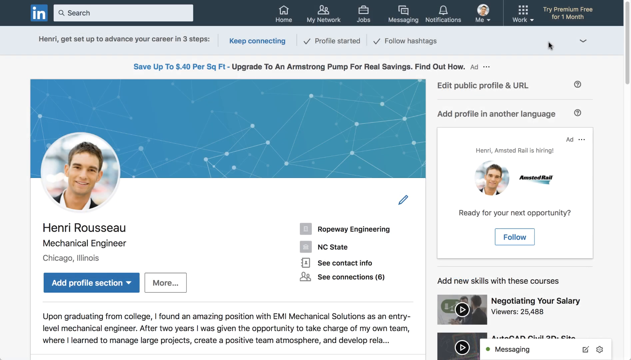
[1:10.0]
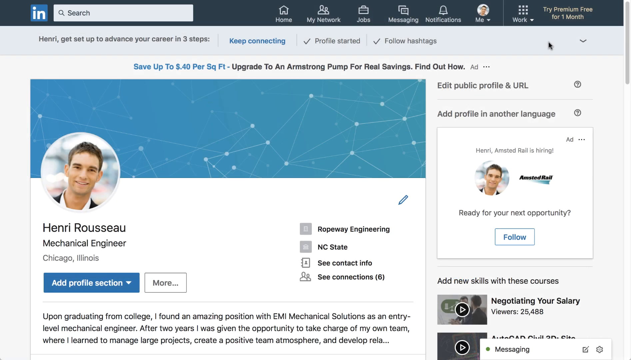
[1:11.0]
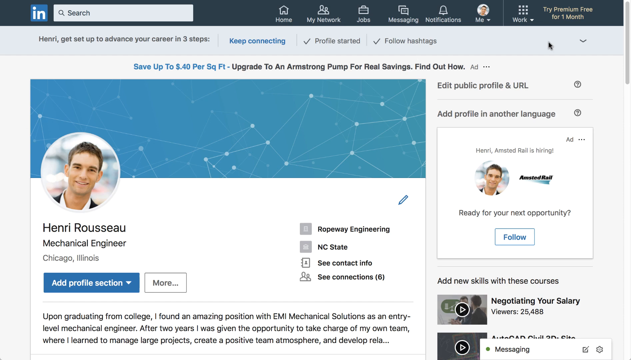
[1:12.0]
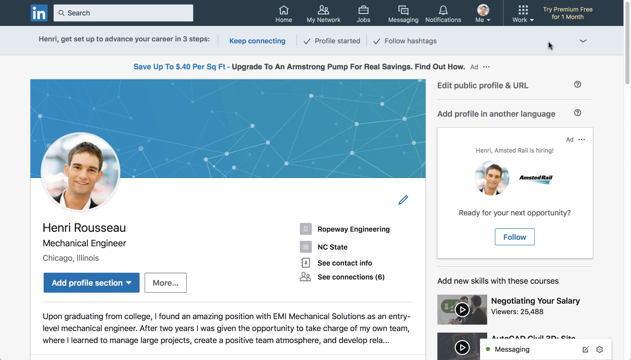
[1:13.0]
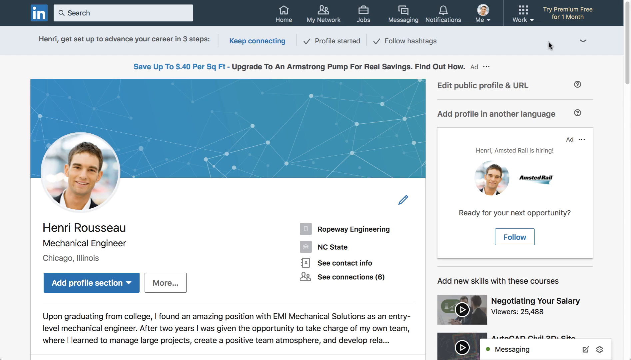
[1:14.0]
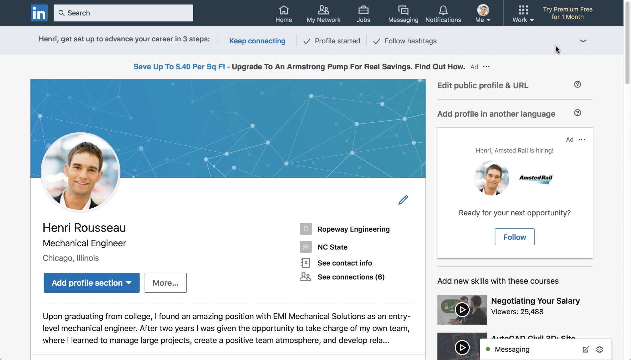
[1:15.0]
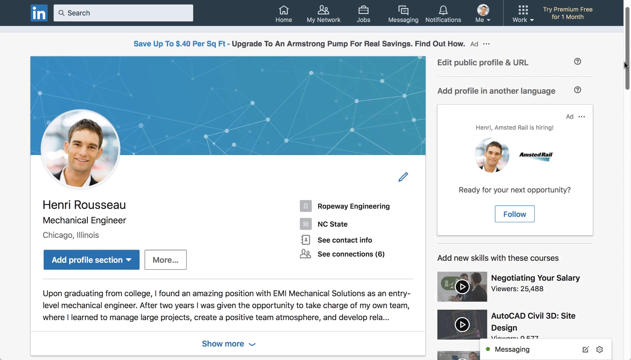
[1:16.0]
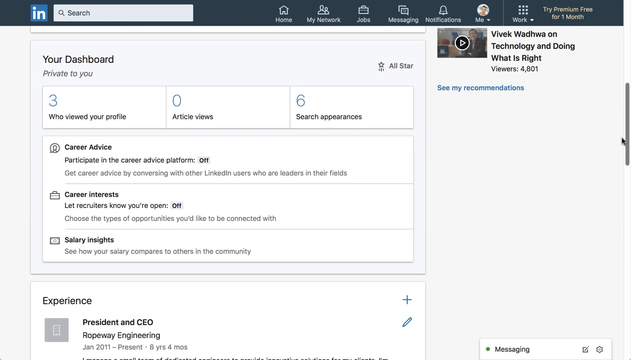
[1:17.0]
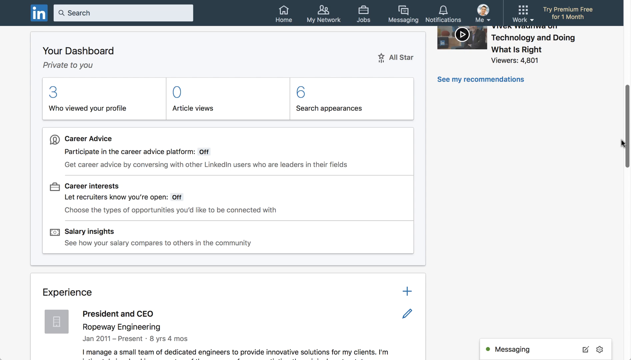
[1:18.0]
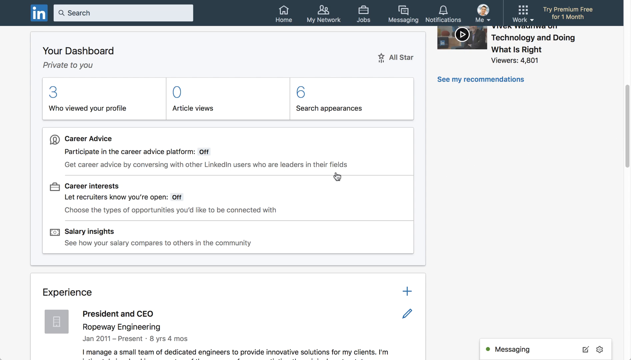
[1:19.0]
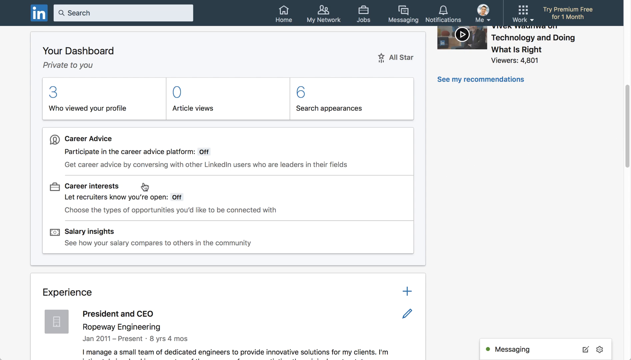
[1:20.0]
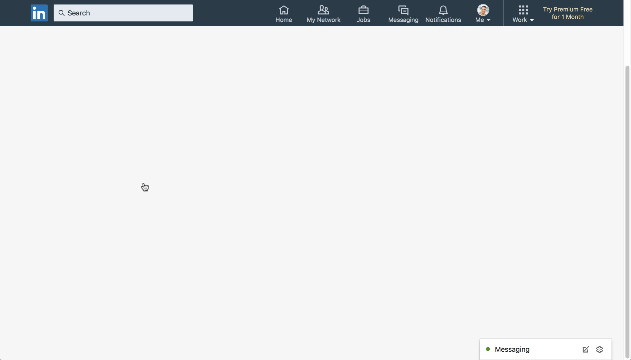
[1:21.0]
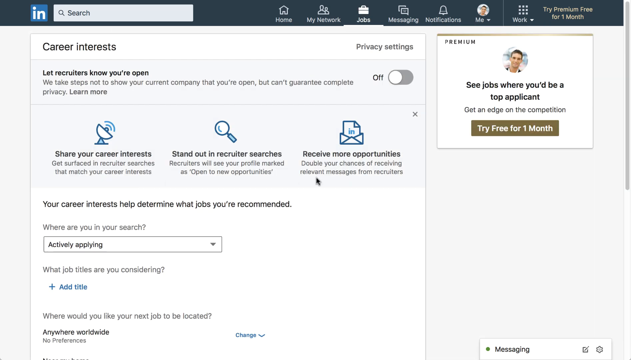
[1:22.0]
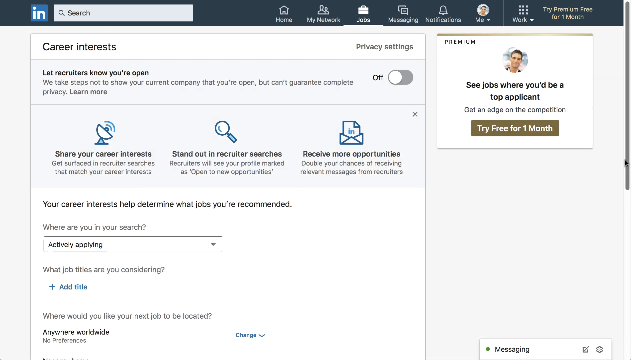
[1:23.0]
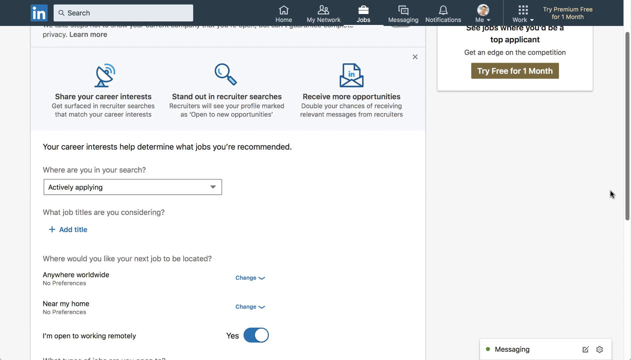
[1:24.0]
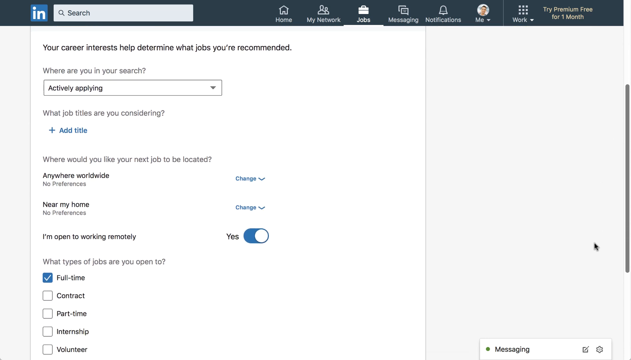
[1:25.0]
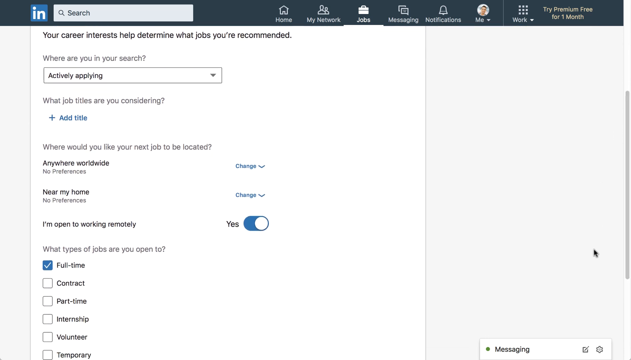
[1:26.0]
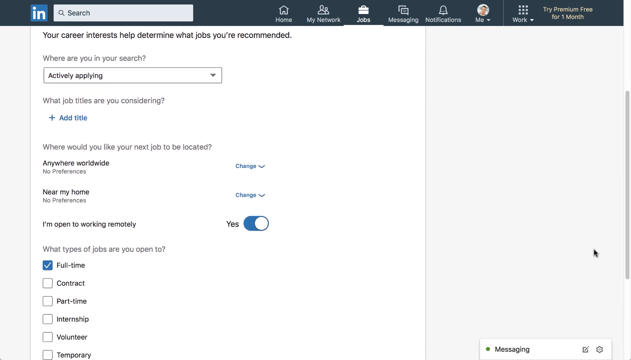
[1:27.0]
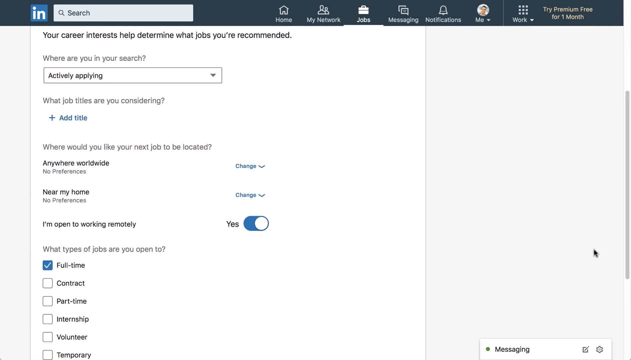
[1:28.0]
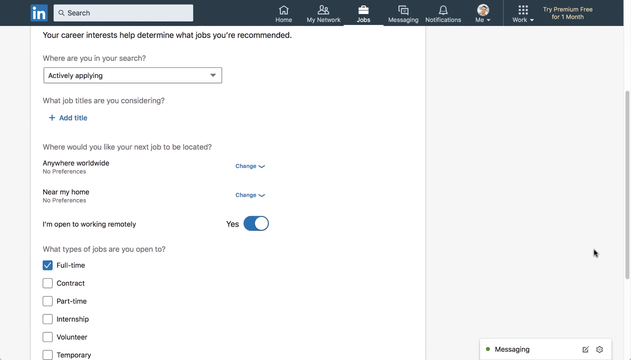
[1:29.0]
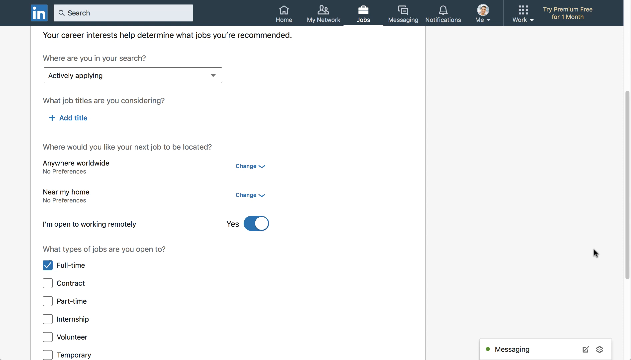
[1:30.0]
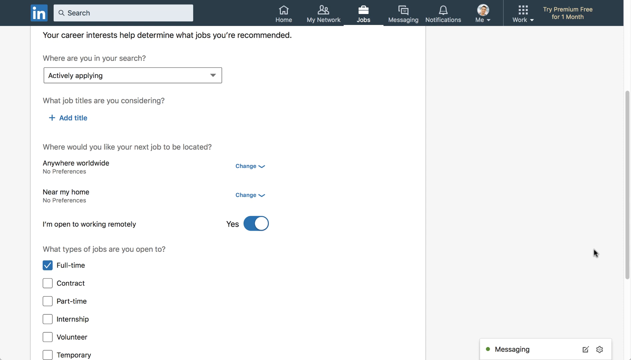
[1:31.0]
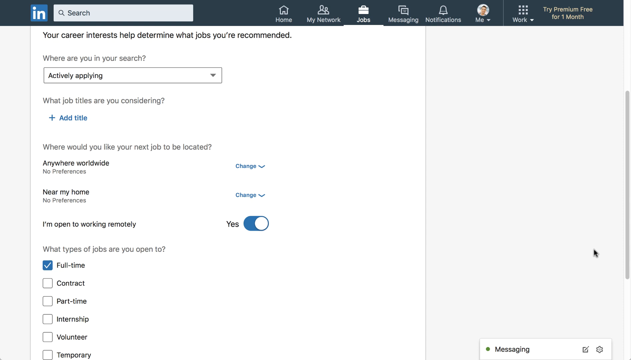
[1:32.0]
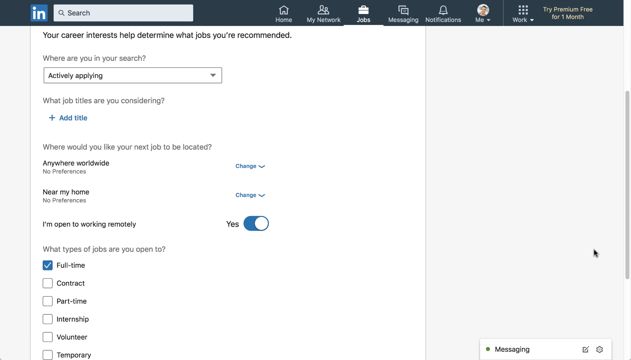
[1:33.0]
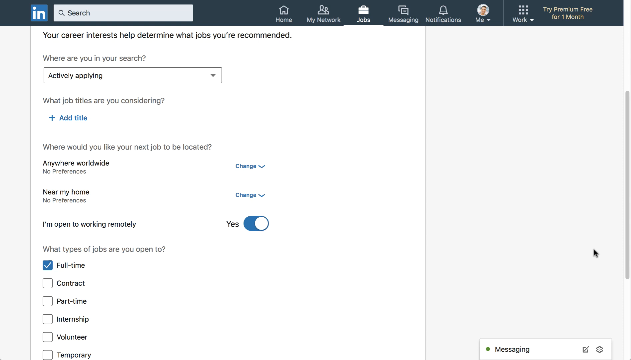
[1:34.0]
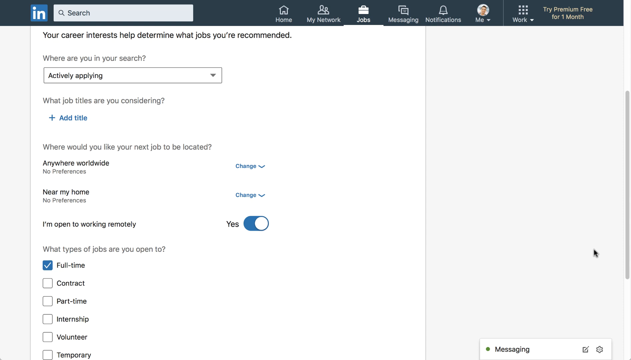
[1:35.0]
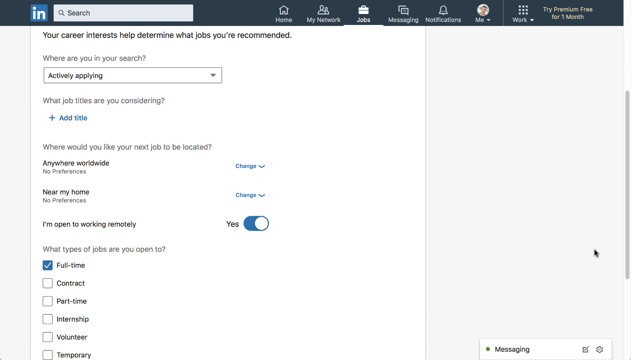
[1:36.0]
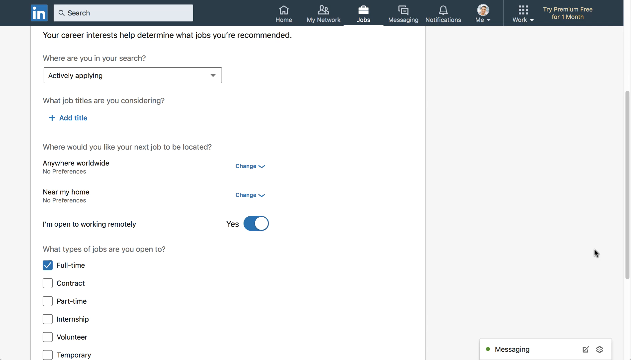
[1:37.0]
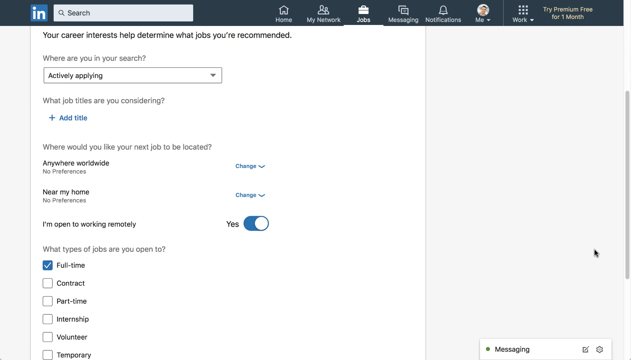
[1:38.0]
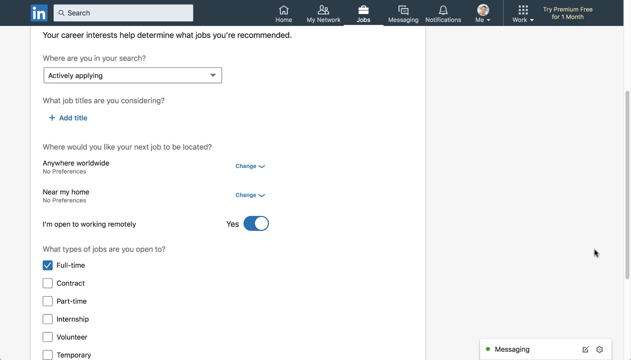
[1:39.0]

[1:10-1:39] The view returns to Henry's profile page on Indeed. He moves the mouse to the scroll bar on the right side and slowly scrolls down about halfway through the page. He hovers over his career interests and selects it, which shows career interest information such as sharing your career interests, standing out in recruiter researches, and receiving more opportunities. There are options that can be selected to be visible on the profile for recruiters. The user scrolls further down, revealing more options: where the next job should be located, the option to work remotely, and the types of jobs the user is open to. Full-time is selected, while the other options, contract, part-time, internship, and volunteer, are not selected. The user then idles on that page for several seconds.